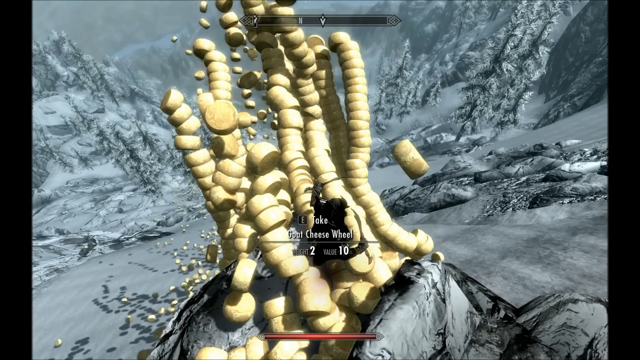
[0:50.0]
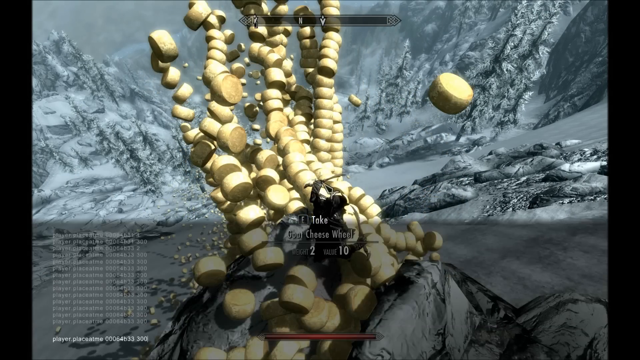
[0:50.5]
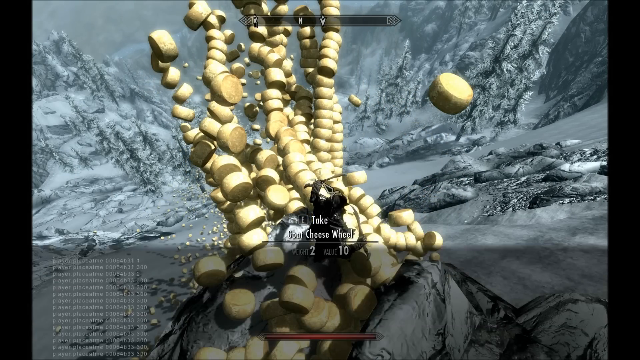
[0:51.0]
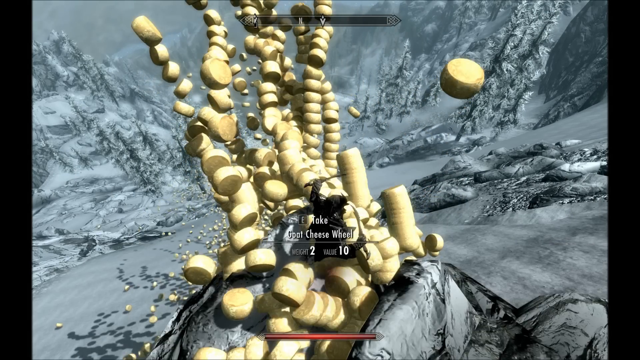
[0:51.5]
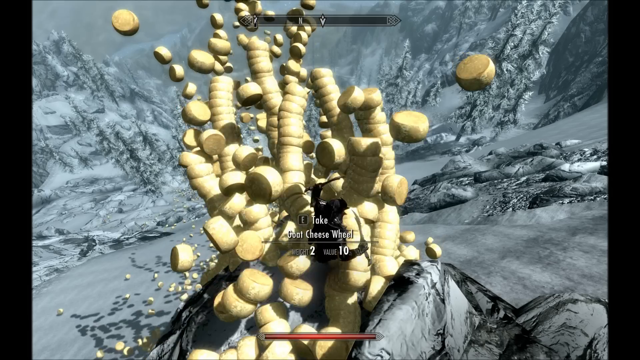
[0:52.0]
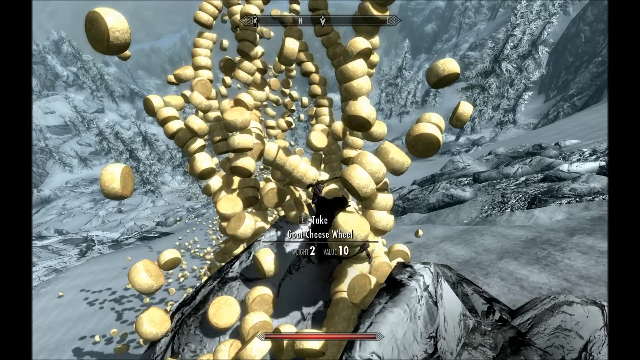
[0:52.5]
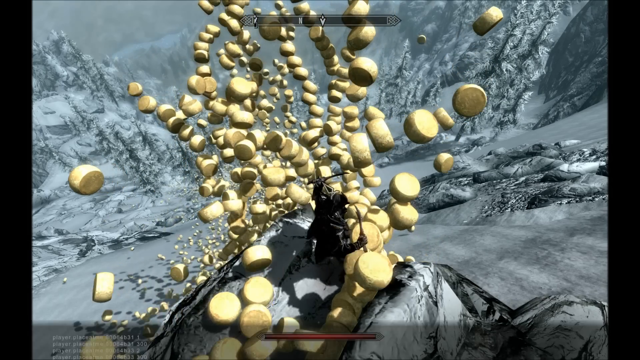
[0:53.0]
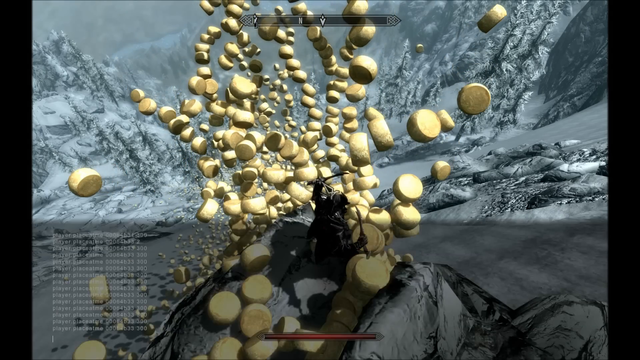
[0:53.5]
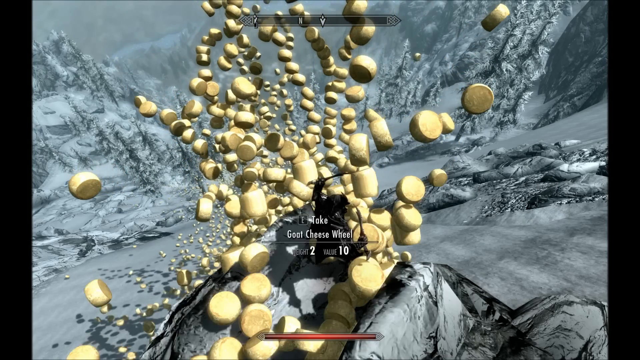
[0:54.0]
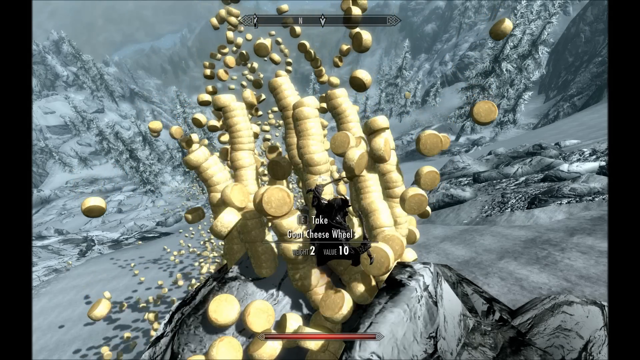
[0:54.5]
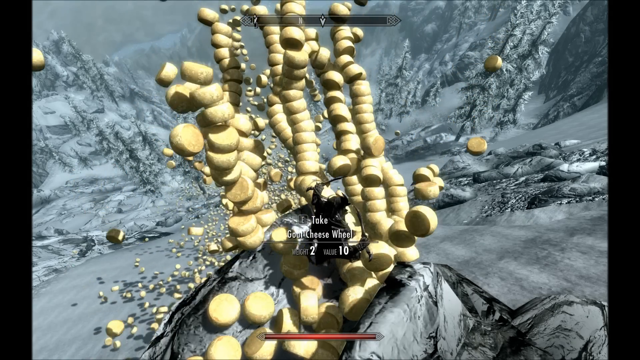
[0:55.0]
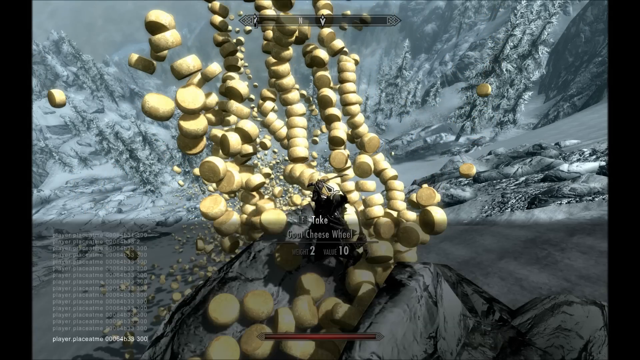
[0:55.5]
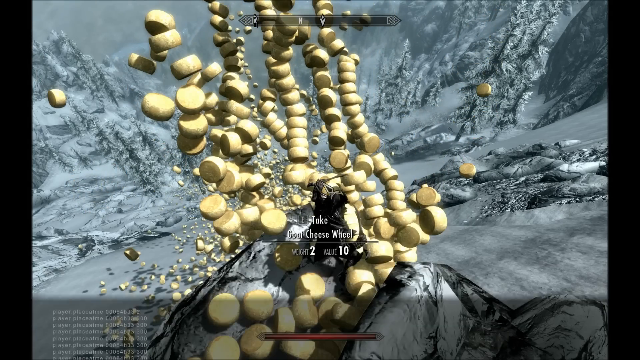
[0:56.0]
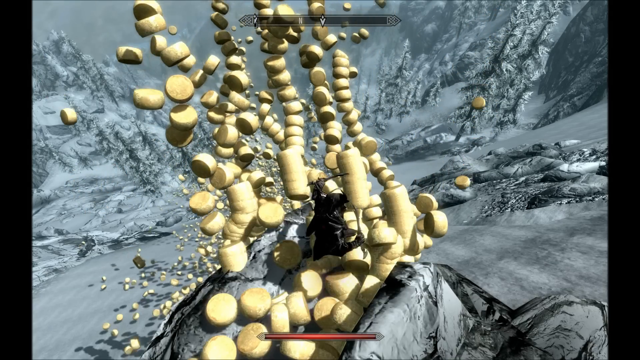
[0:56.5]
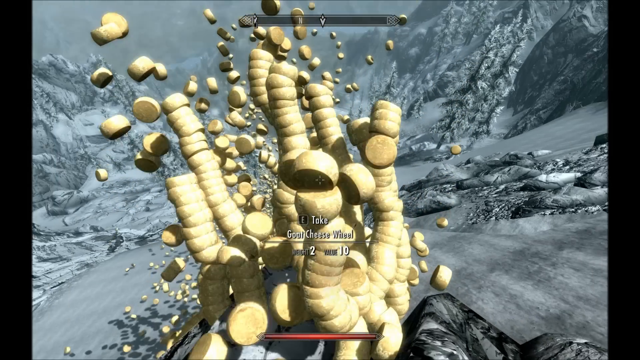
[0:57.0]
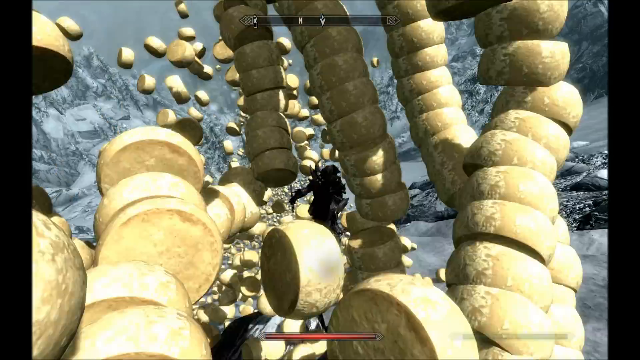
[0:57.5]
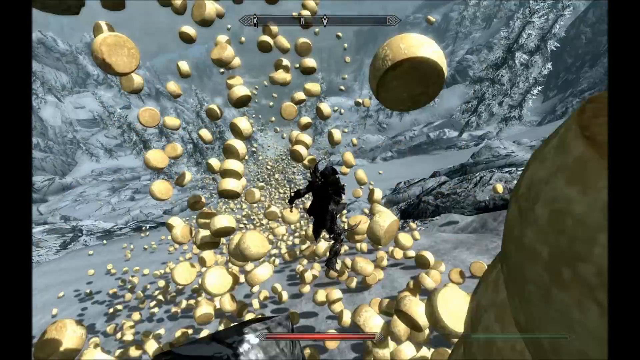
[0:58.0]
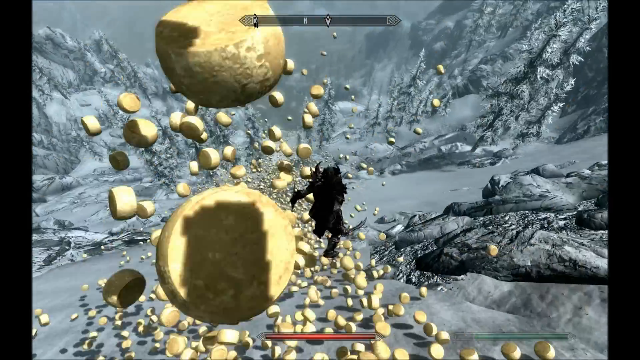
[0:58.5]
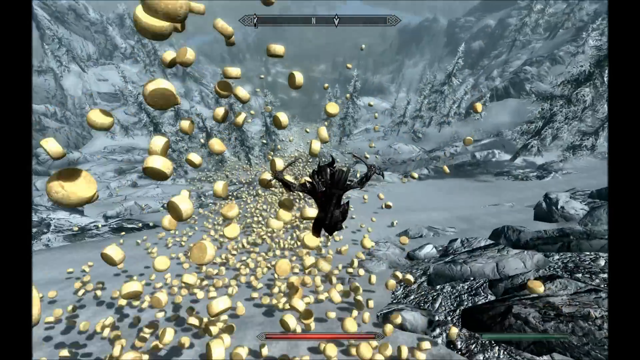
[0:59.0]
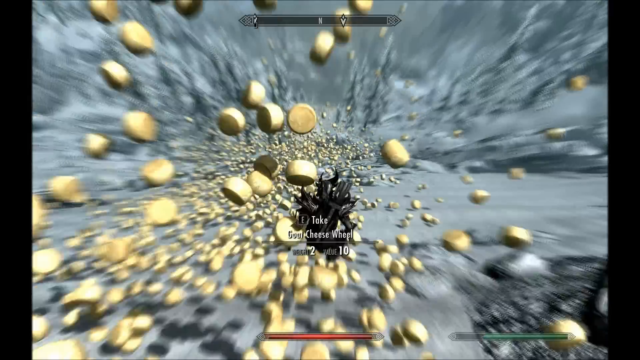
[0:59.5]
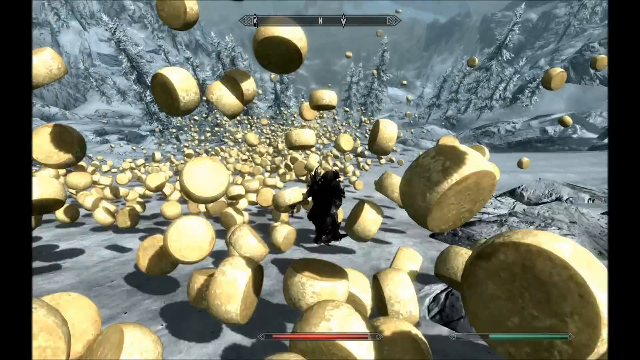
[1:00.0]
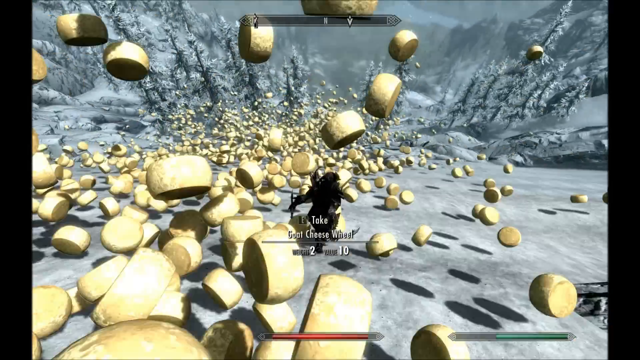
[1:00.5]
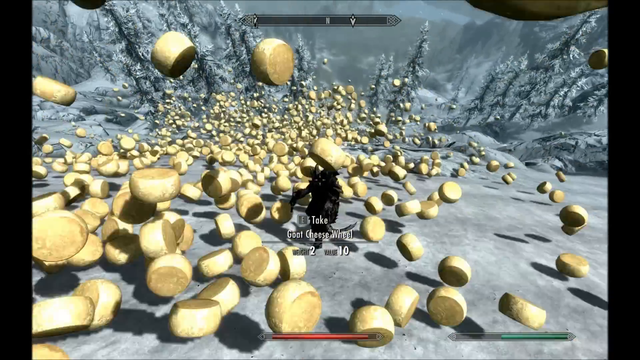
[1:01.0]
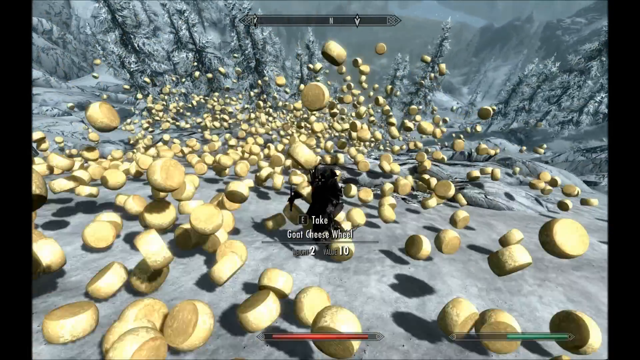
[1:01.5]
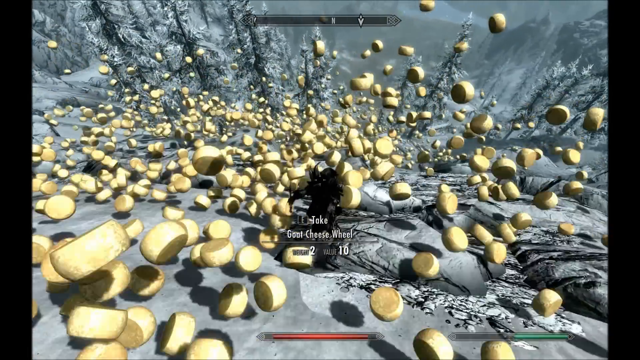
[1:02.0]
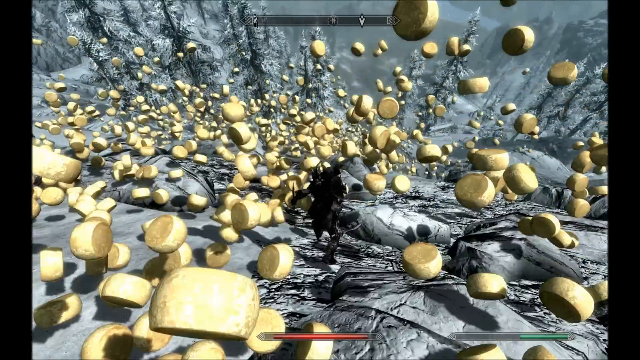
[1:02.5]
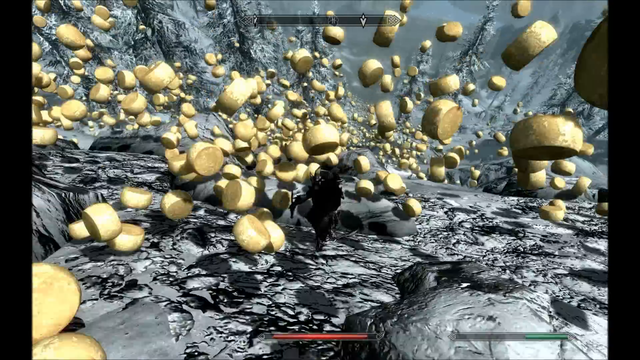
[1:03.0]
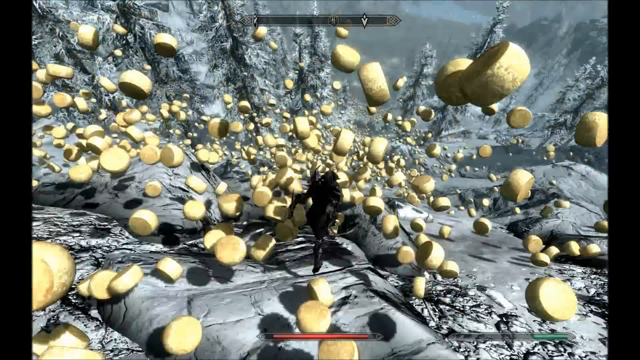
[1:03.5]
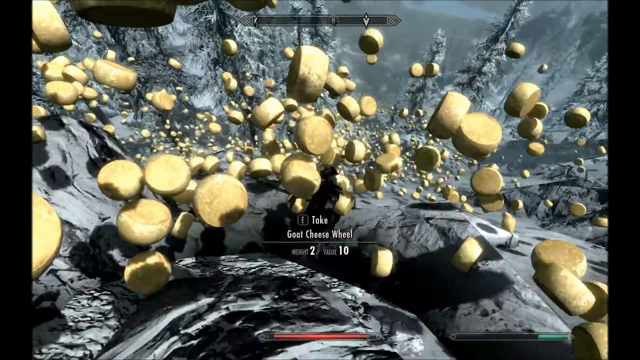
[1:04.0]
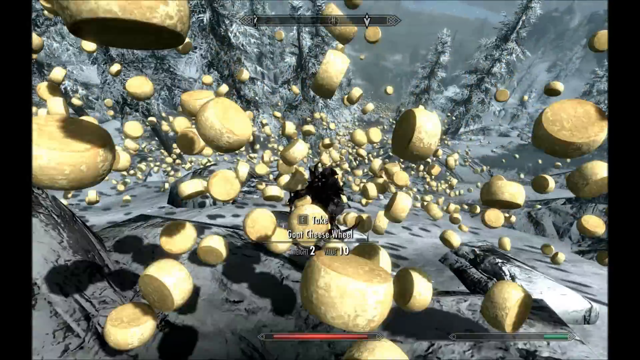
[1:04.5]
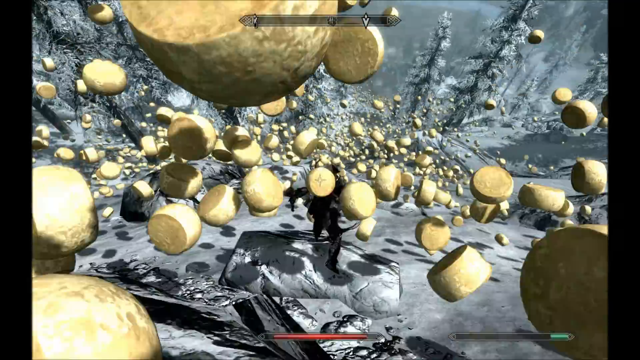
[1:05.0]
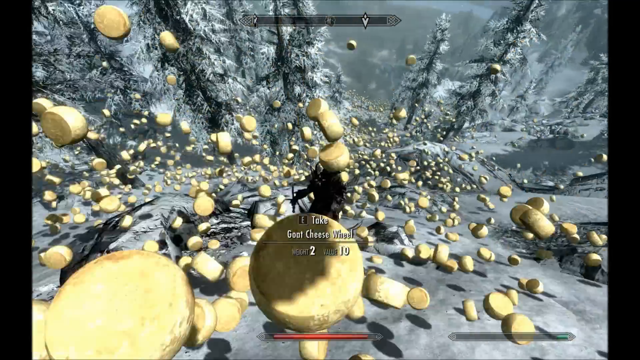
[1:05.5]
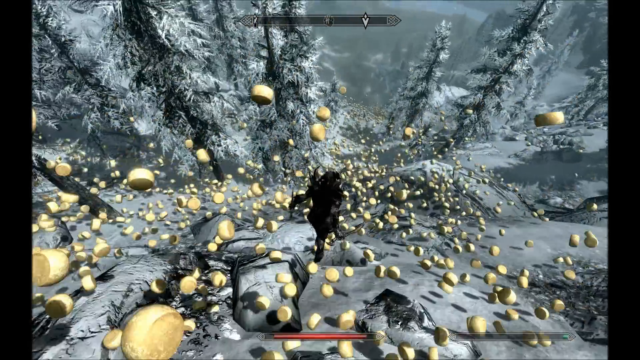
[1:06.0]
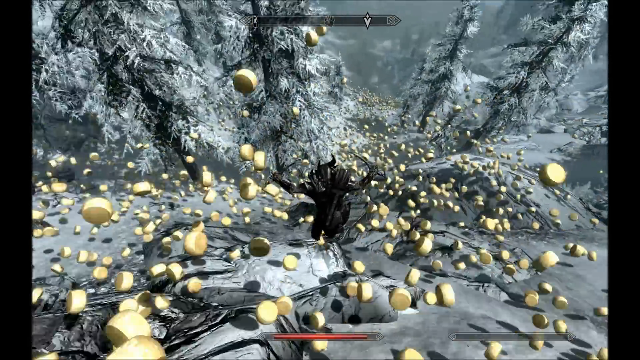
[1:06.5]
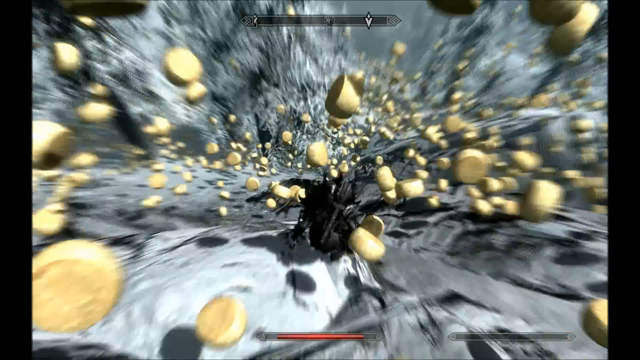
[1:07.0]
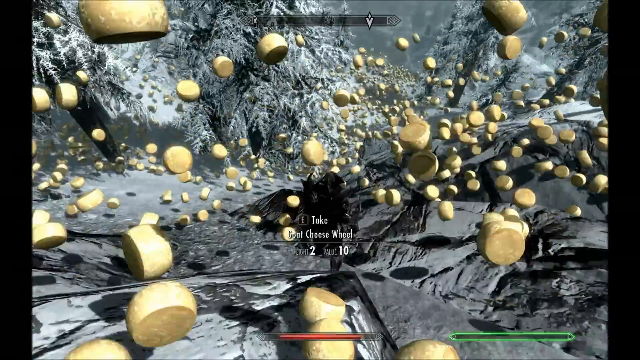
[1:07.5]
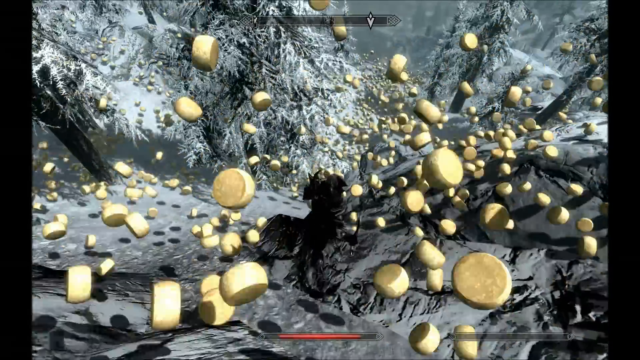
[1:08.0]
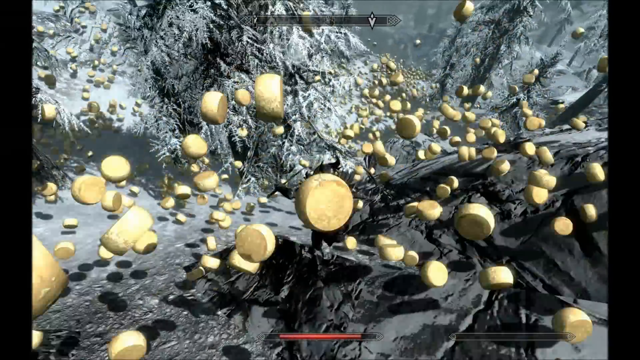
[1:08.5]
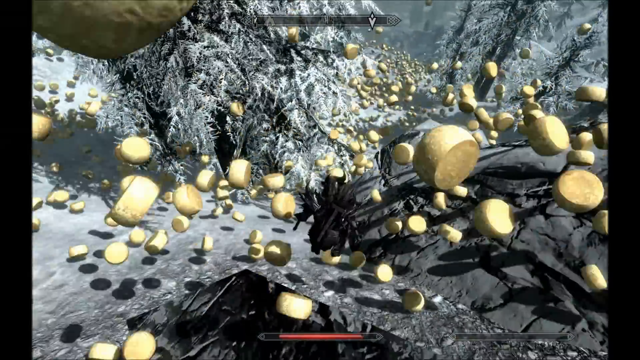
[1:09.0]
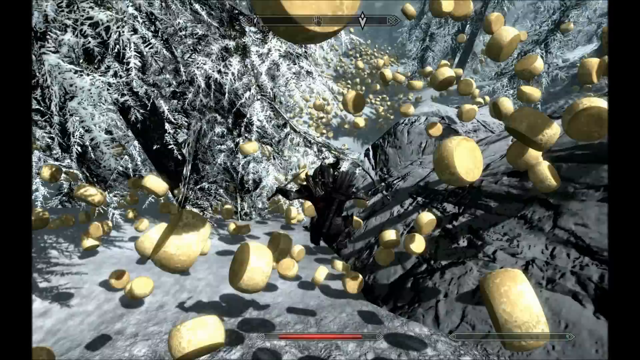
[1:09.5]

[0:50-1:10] In the game, a compass-like horizontal line runs across the upper center of the screen, showing the letter N for north and a white arrow indicating the direction the character standing on the boulder is facing. Items spring out from the boulder the character is standing on. The camera looks down, kind of at the top of the character, as the items spring up around them. The character then jumps off the boulder and slides down the mountain, and the objects, which look like cheese wheels, slide along with them. Text reading "take a cheese wheel" appears as the objects spring up into the air from the ground.